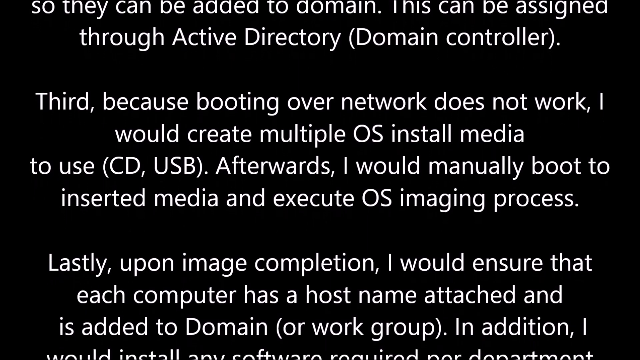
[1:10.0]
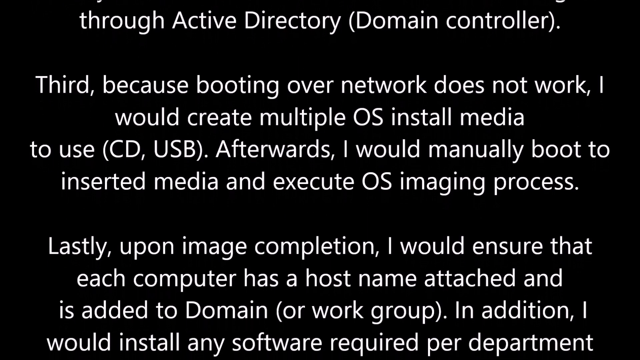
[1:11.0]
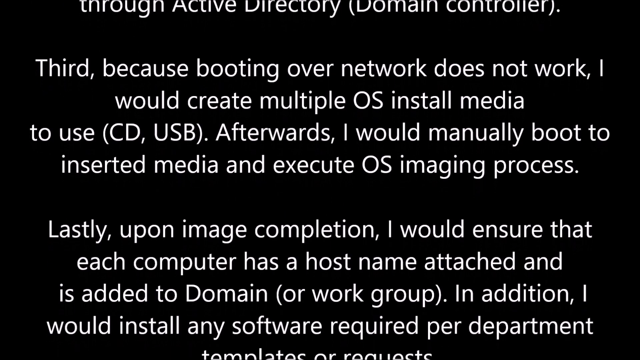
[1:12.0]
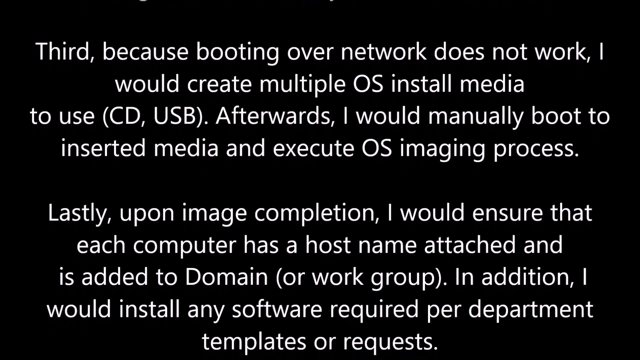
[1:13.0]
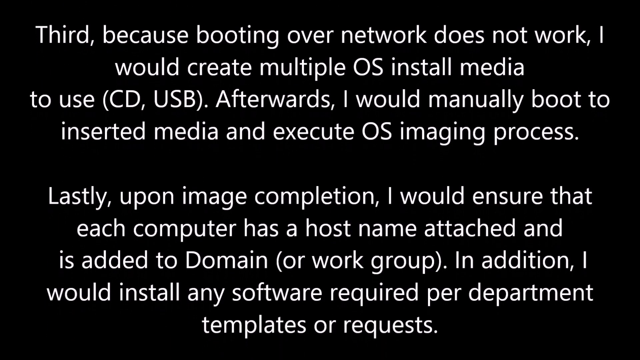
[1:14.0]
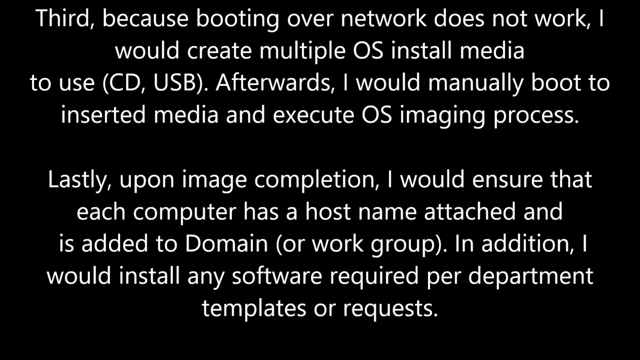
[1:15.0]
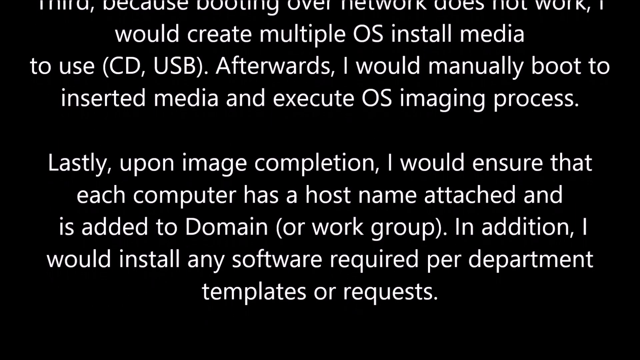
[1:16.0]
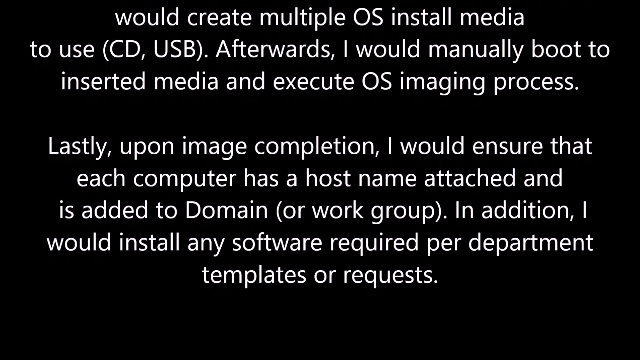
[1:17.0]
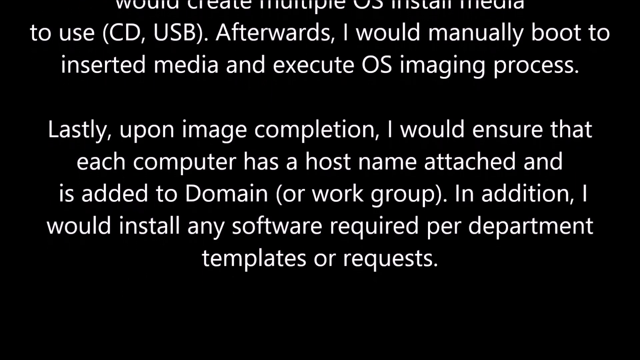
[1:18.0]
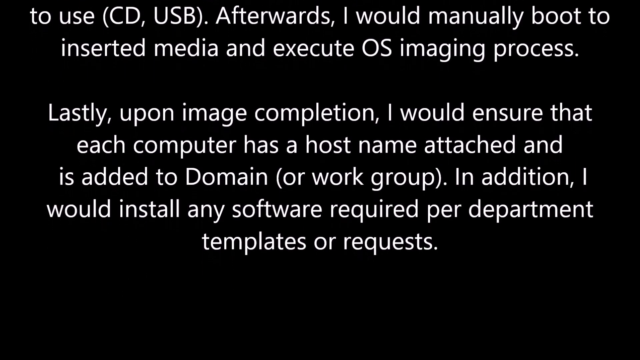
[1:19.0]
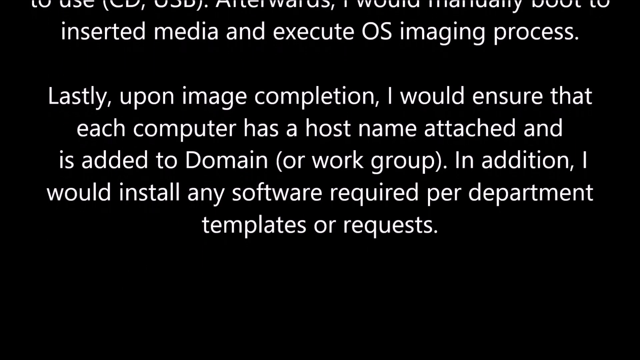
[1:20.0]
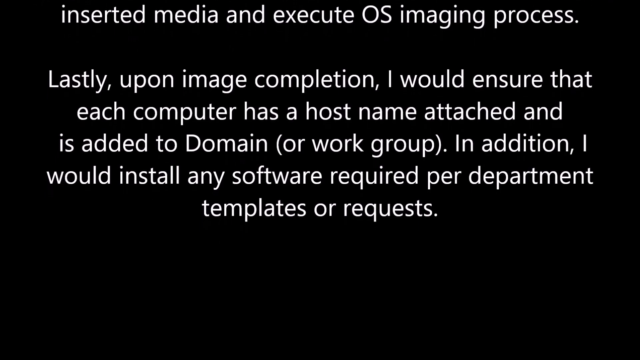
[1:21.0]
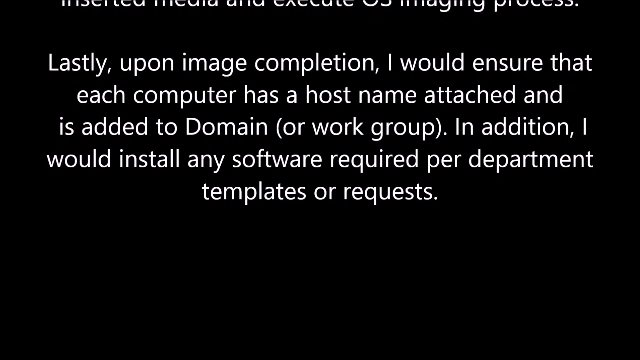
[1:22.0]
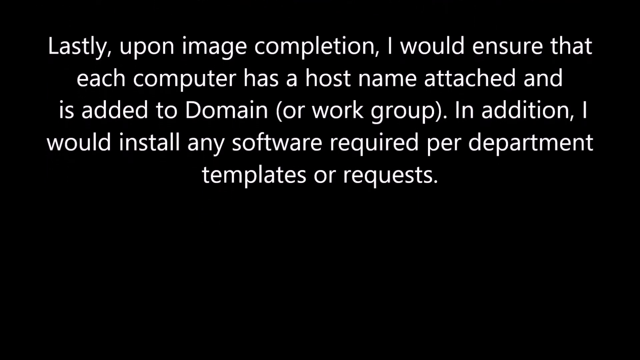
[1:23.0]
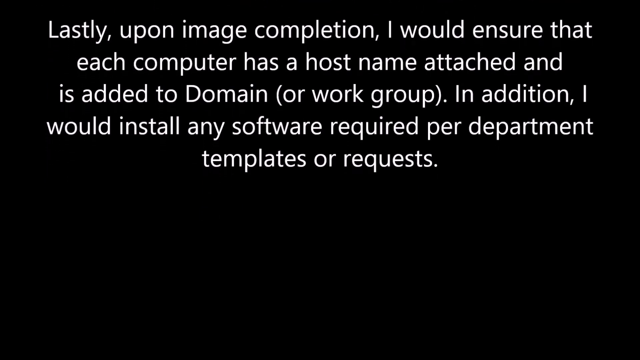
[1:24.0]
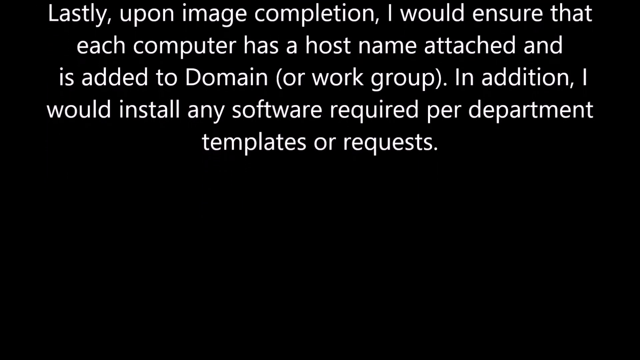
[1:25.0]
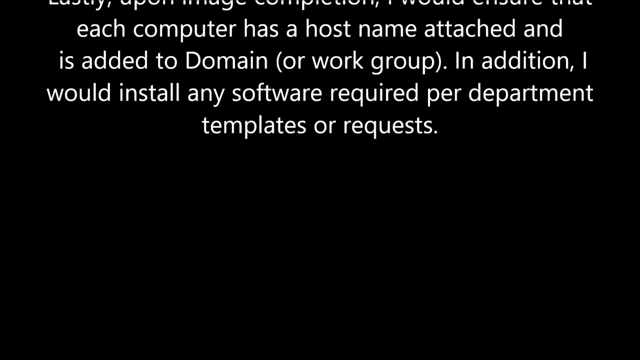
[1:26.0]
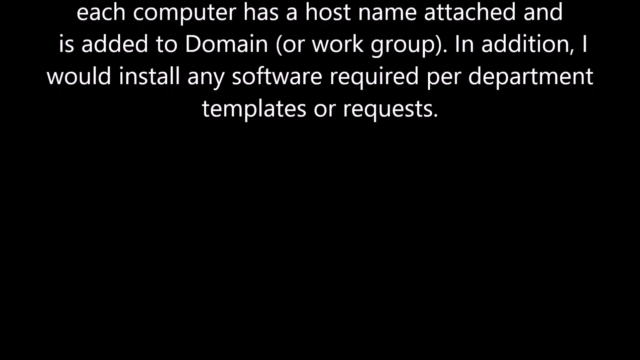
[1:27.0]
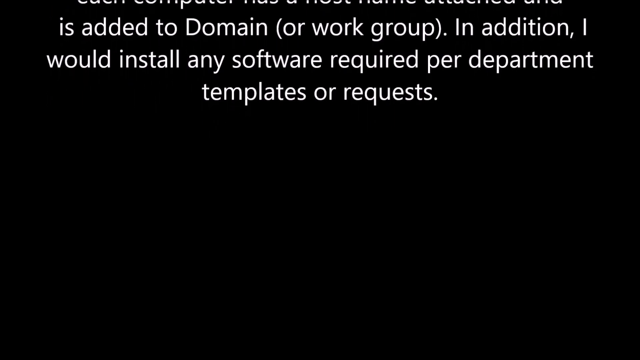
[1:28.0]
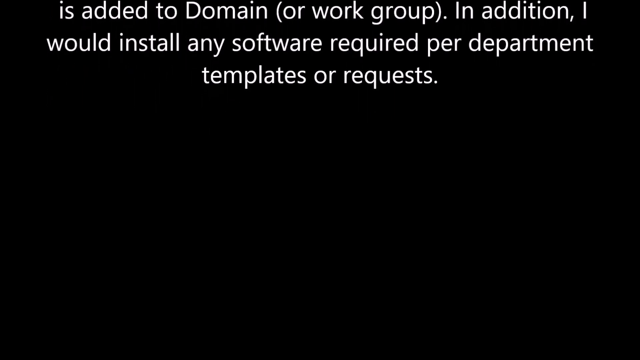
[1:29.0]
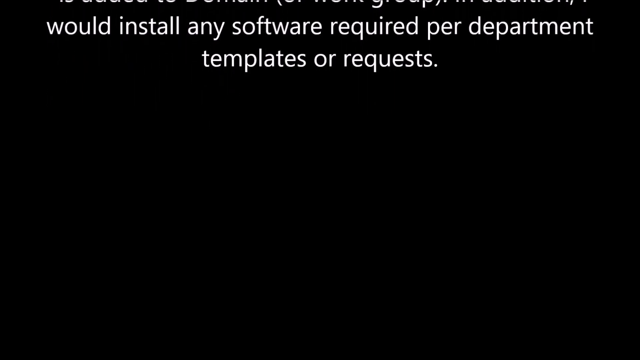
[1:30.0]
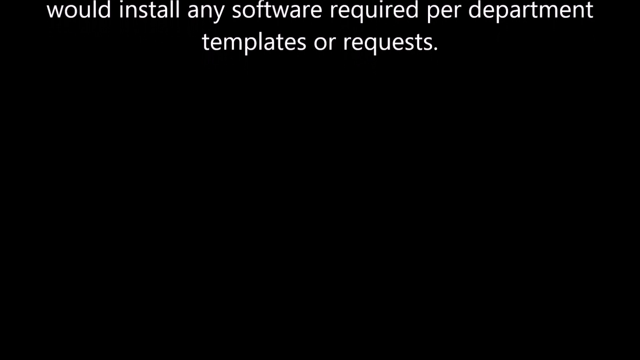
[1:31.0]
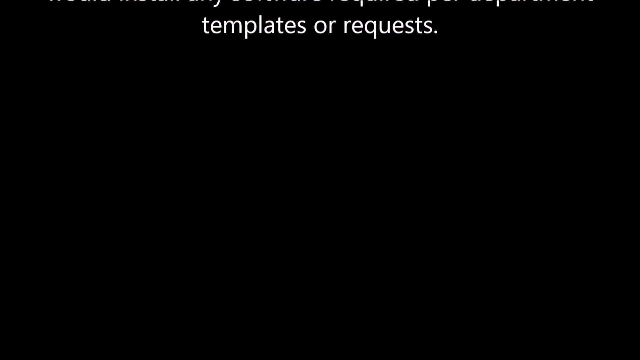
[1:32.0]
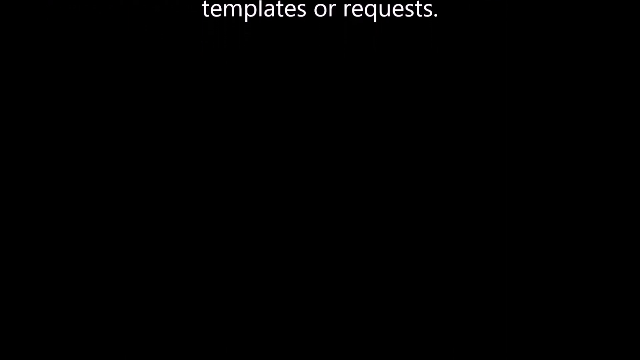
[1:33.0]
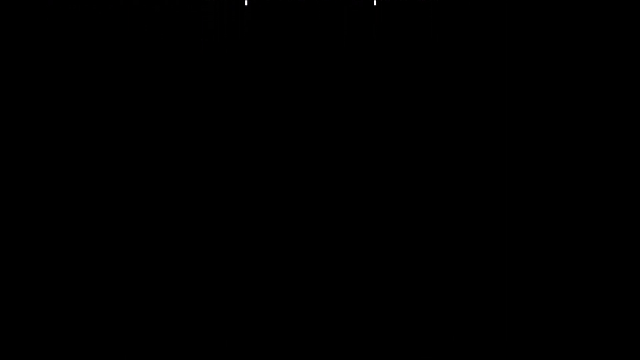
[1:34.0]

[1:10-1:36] Simple white text scrolls up from the bottom of the screen to the top. Partially visible text from the previous section reads "So they can be added to domain. This can be assigned through Active Directory (Domain Controller)". A third point follows: "Third, because booting over network does not work, I would create multiple OS install media to use (CD, USB). Afterwards, I would manually boot to inserted media and execute OS imaging process." As the text scrolls further, a final point is revealed: "Lastly, upon image completion, I would ensure that each computer has a hostname attached and is added to domain (or work group). In addition, I would install any software required per department templates or requests." The text continues scrolling upwards, gradually disappearing off the screen and leaving a completely blank black screen.